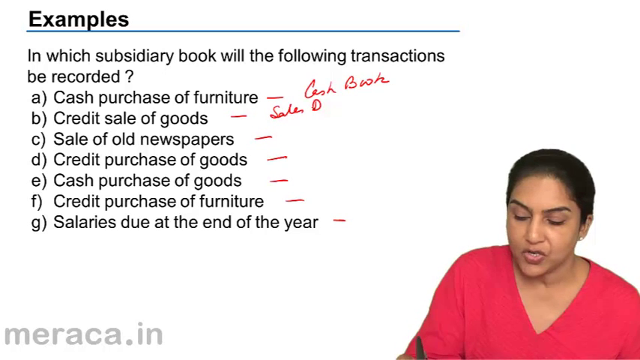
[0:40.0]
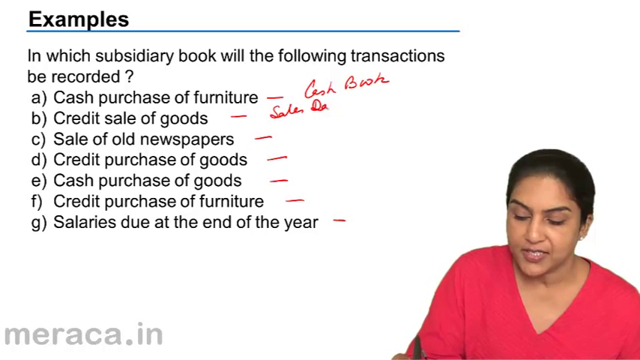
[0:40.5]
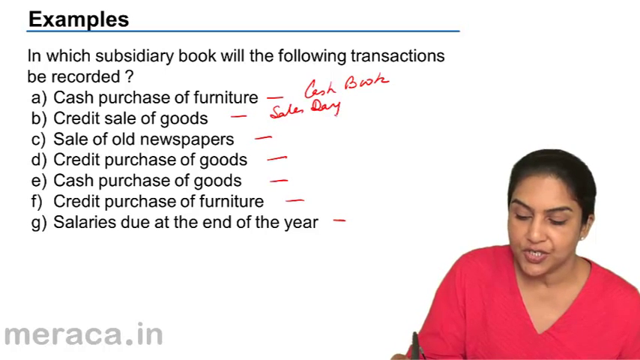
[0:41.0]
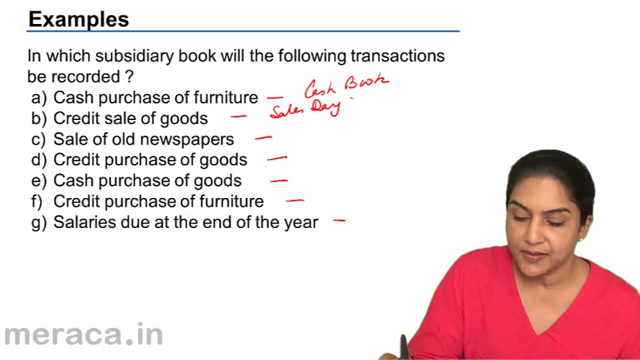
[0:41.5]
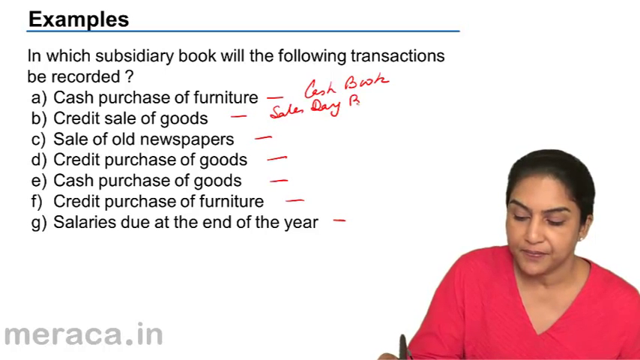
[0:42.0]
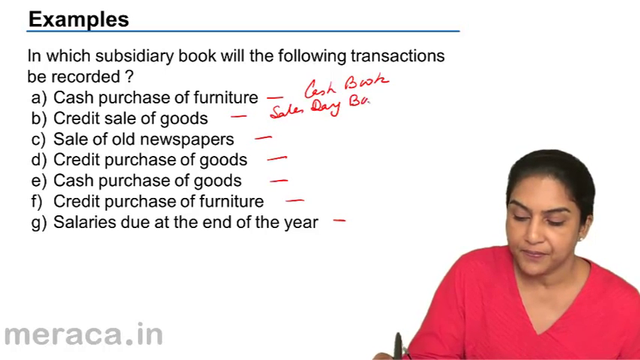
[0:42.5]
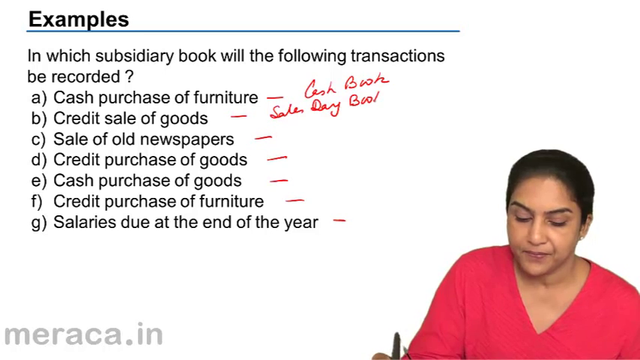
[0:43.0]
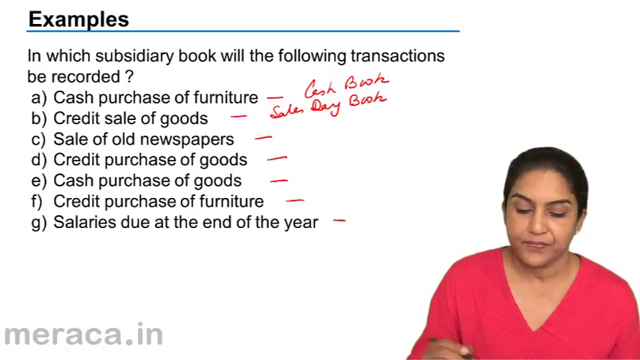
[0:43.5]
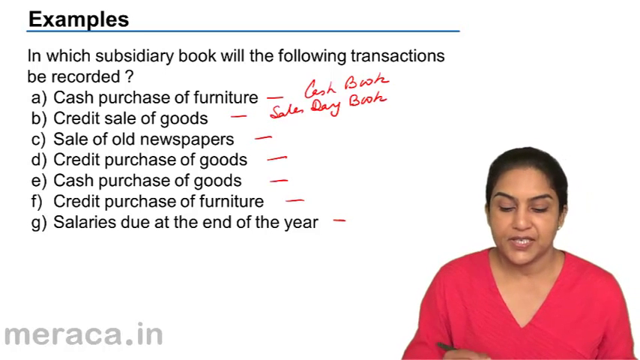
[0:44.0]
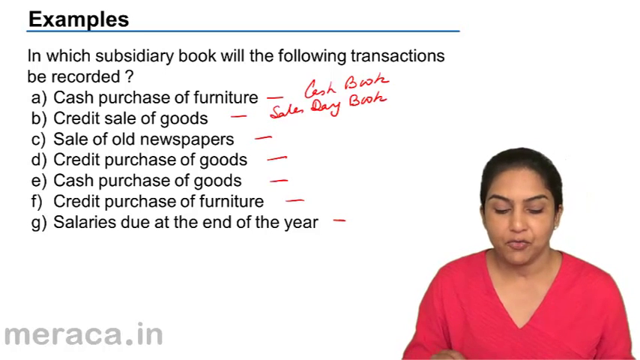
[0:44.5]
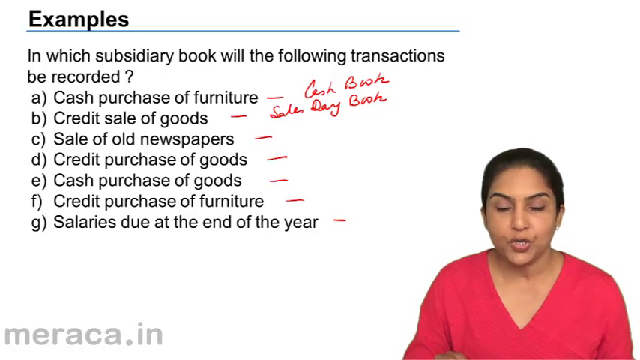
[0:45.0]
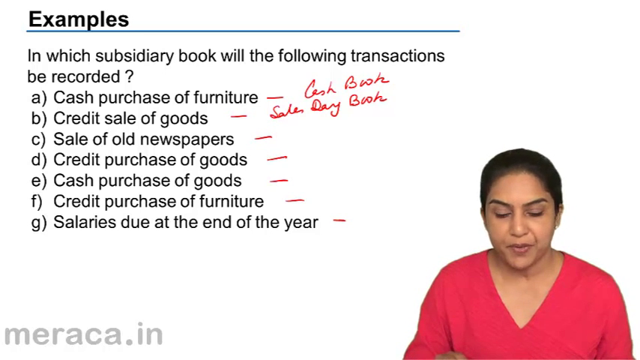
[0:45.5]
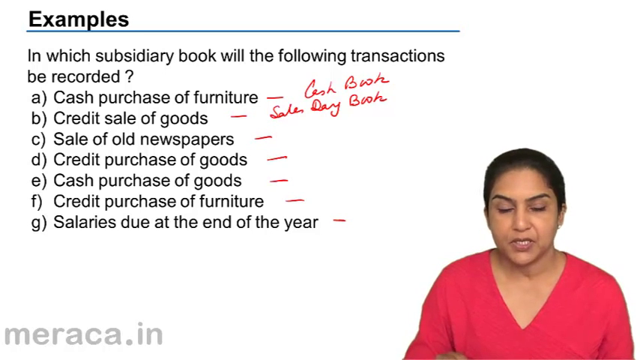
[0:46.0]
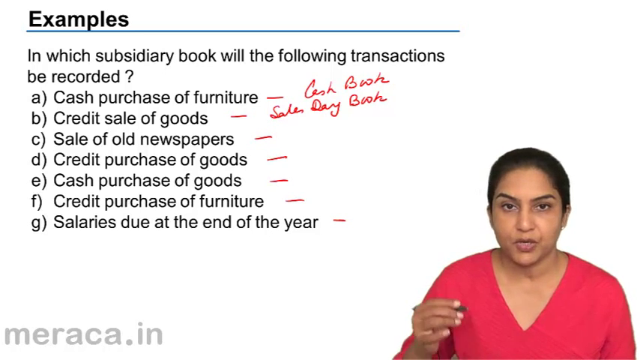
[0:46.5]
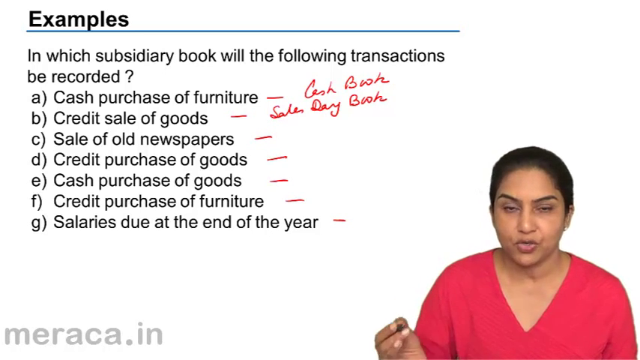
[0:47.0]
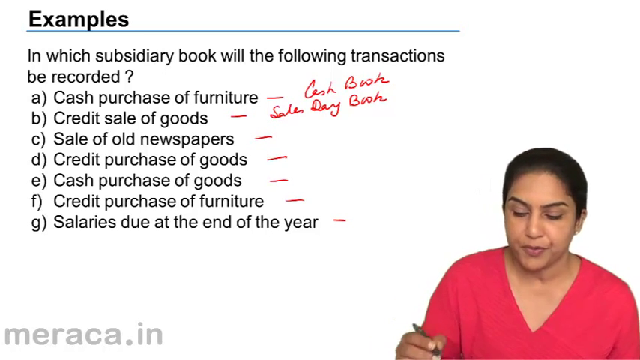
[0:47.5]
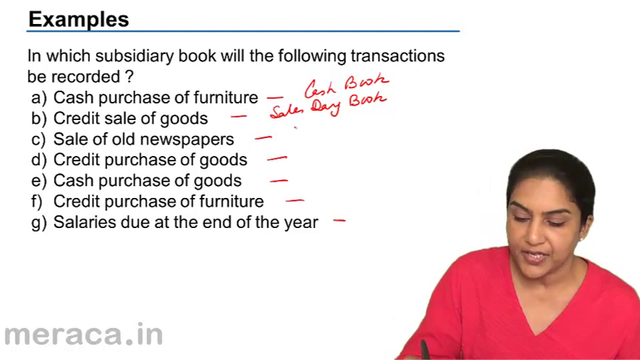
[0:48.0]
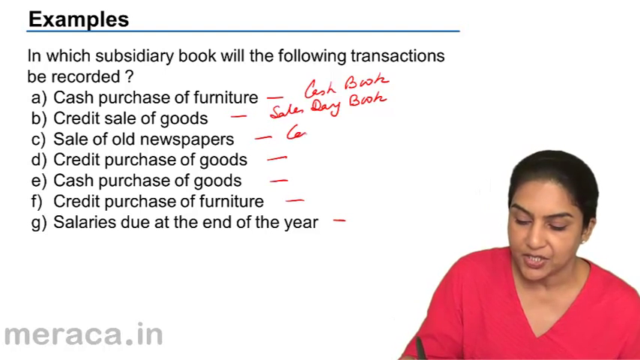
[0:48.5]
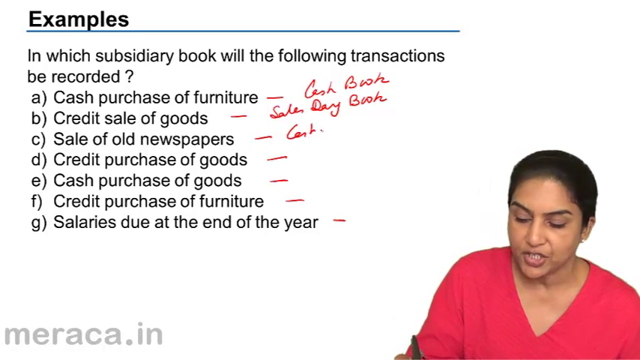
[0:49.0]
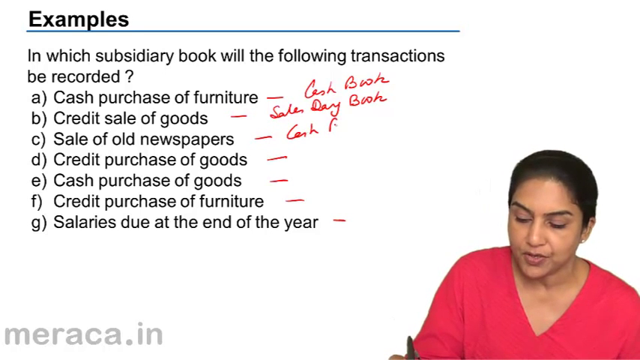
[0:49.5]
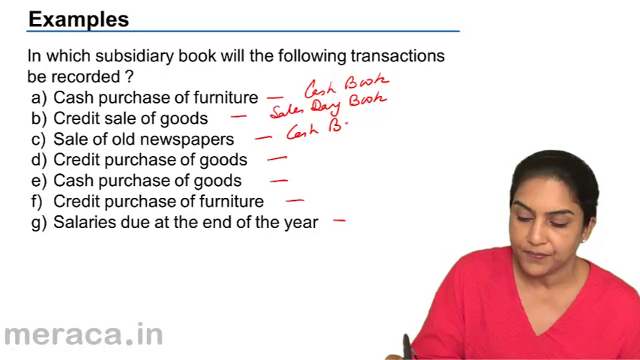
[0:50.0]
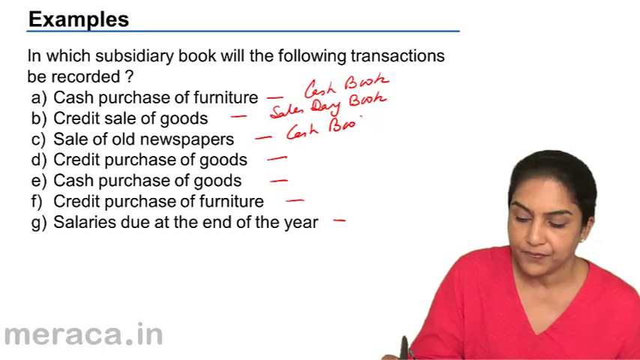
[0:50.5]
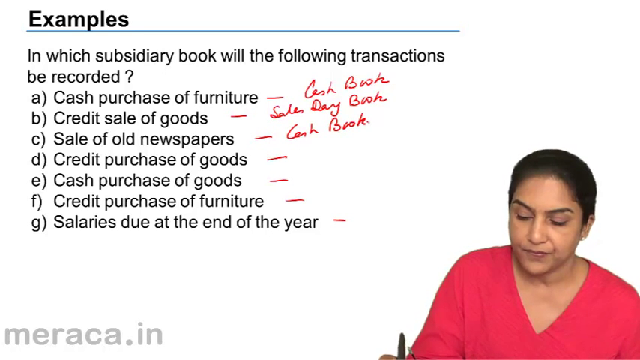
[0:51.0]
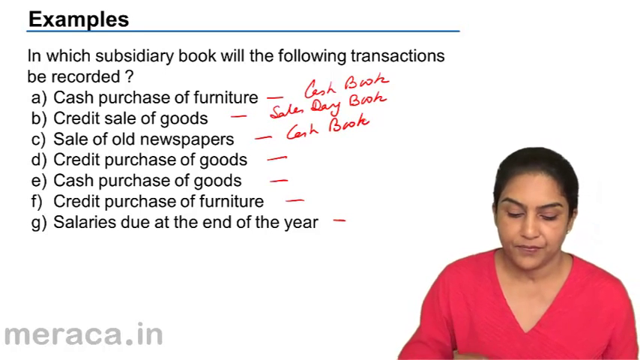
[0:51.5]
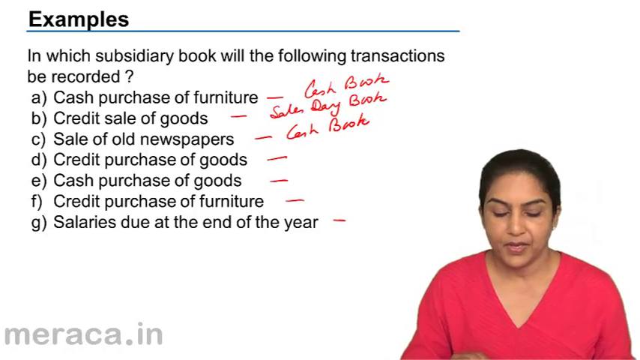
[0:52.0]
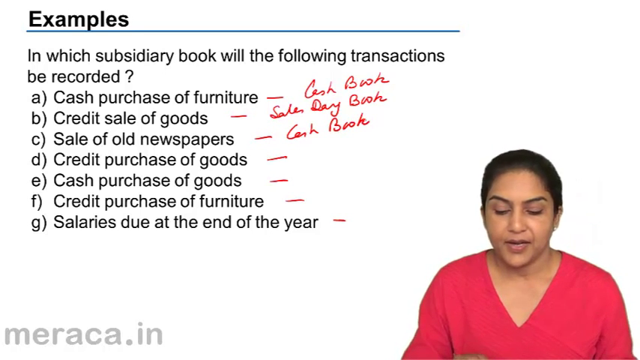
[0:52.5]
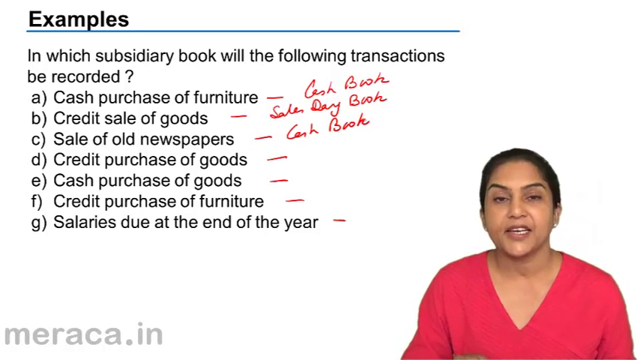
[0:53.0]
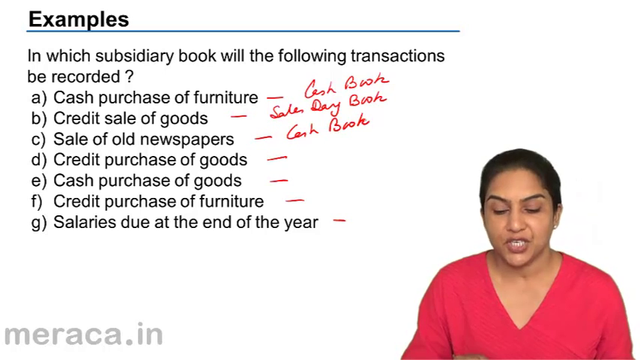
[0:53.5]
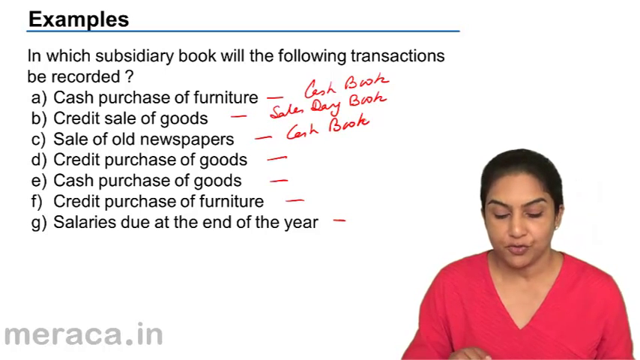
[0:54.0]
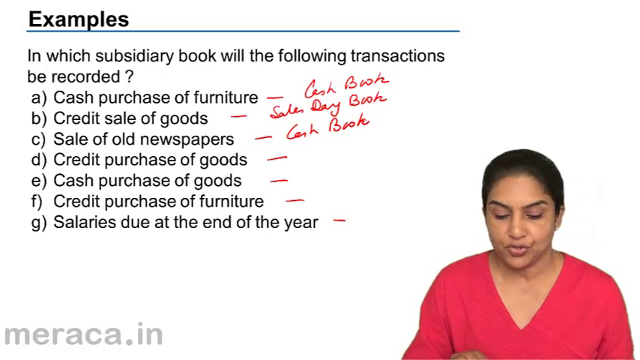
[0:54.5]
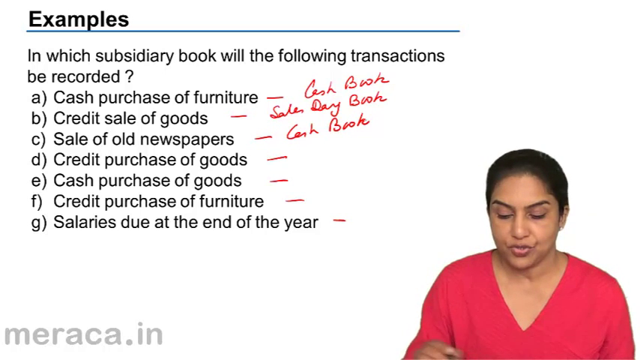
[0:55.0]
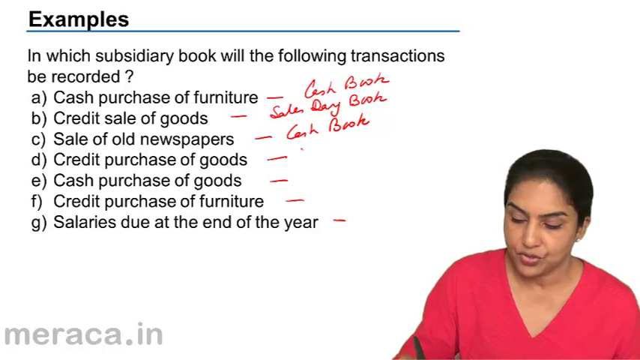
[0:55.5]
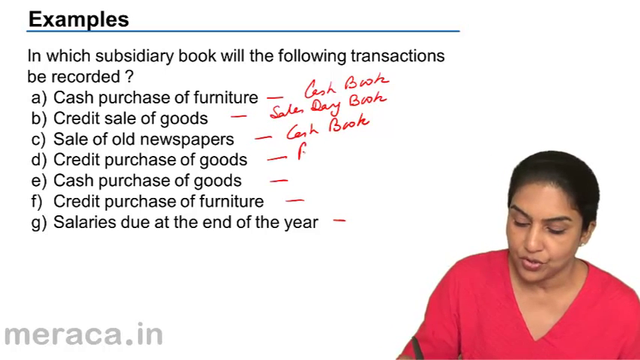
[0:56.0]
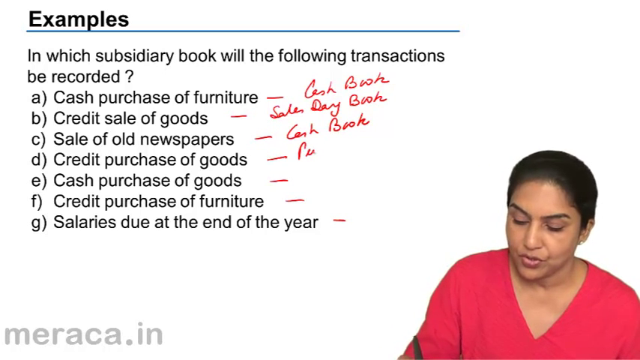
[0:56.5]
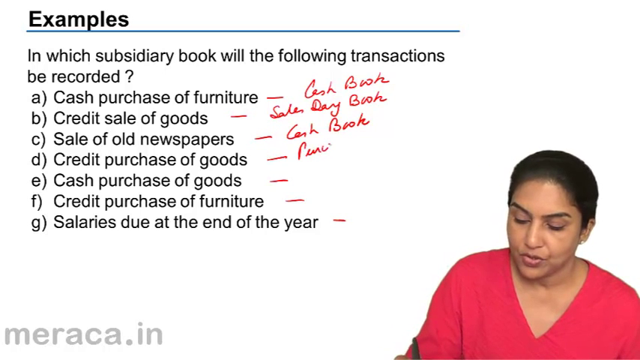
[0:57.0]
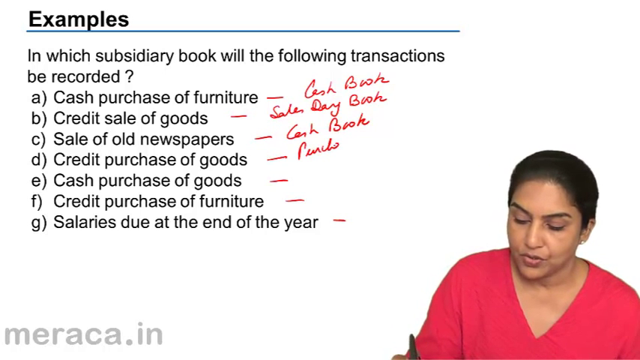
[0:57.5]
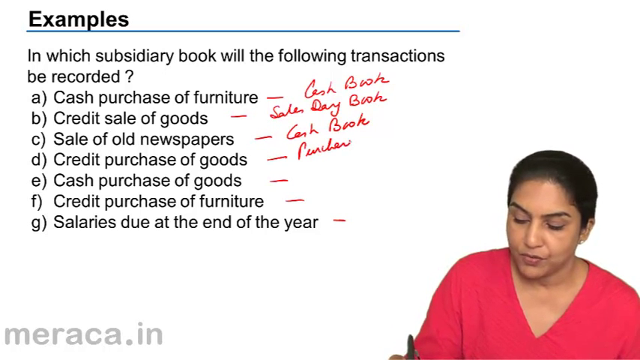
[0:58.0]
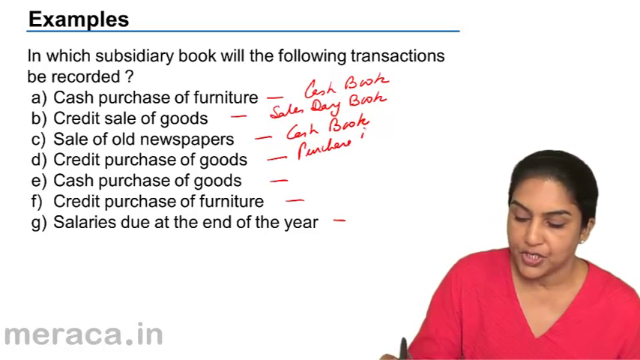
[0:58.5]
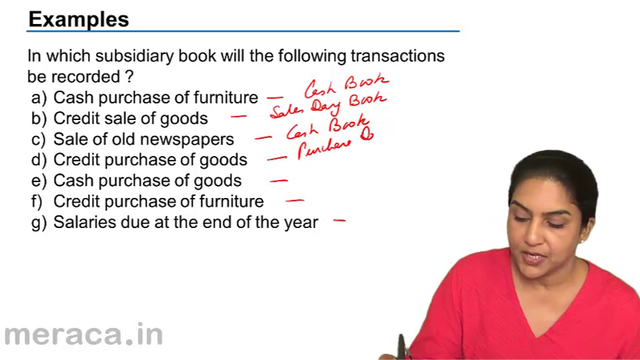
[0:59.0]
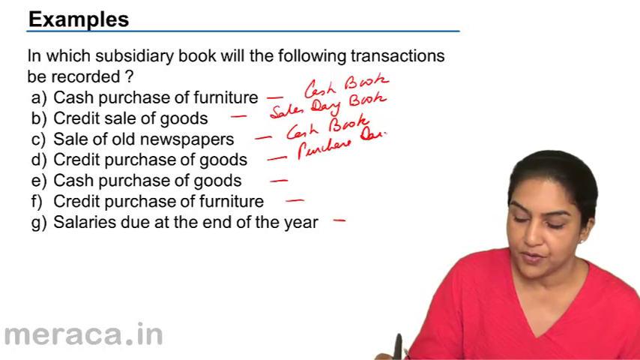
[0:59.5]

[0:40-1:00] Her handwriting reads "cash book" for option A and "sales day book" for option B. For option C she makes eye contact with the camera, then writes "cash book" after sale of old newspapers. She looks up briefly at the camera and back down again, then starts writing something for option D that apparently says "purchase day". The question and format remain the same, with no other noticeable changes.